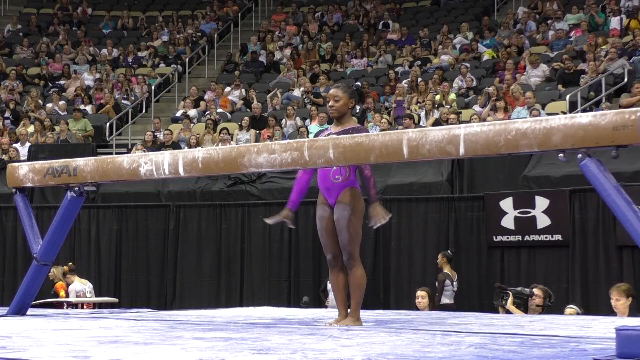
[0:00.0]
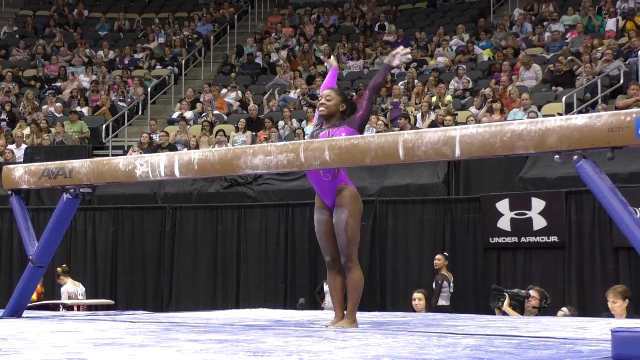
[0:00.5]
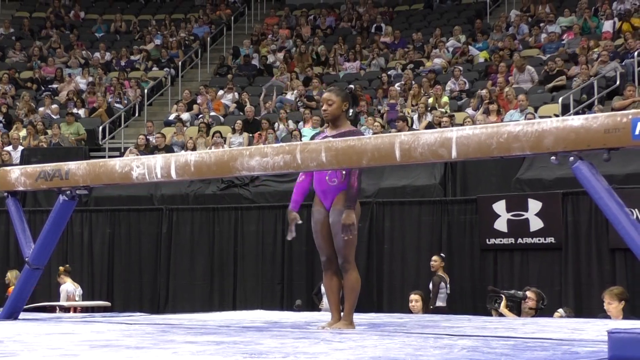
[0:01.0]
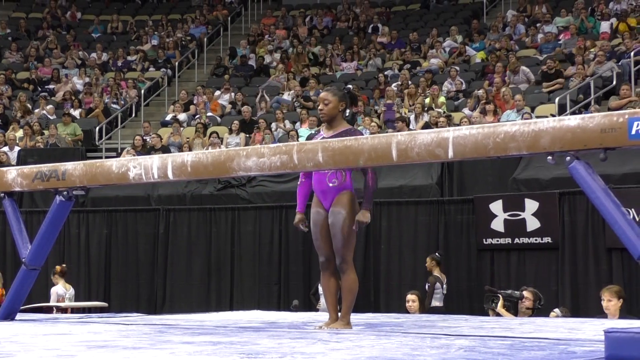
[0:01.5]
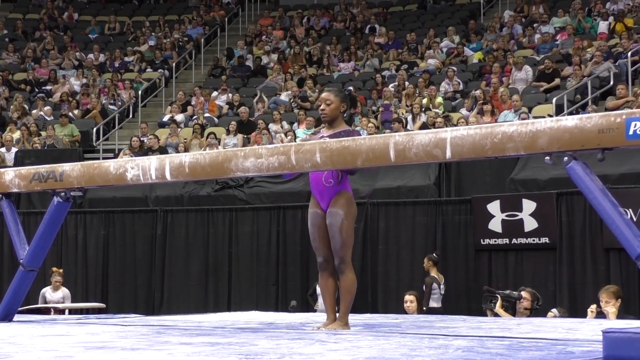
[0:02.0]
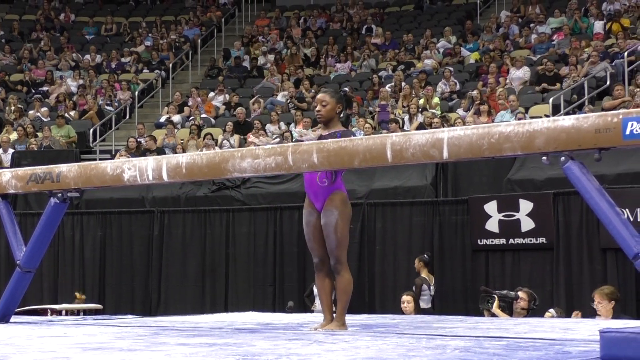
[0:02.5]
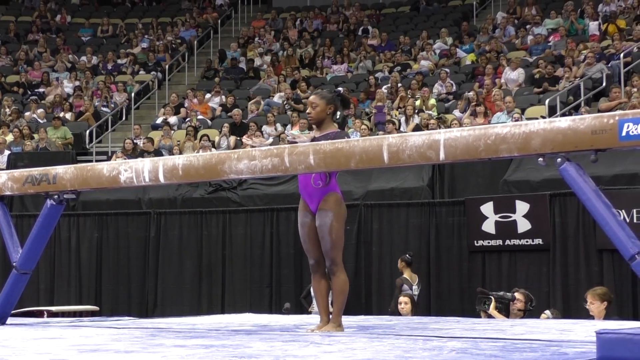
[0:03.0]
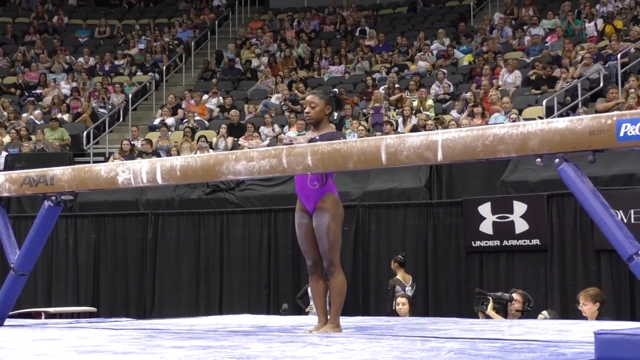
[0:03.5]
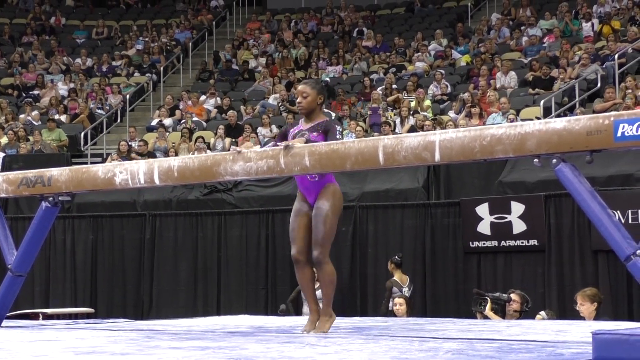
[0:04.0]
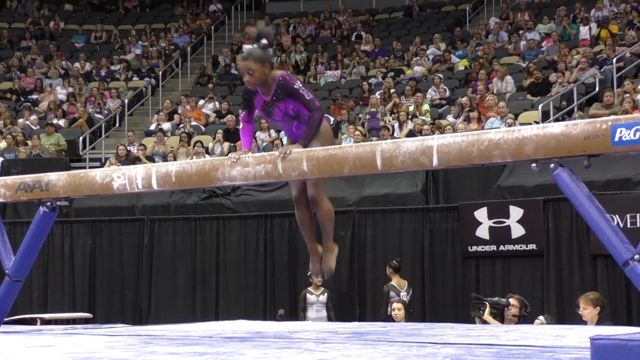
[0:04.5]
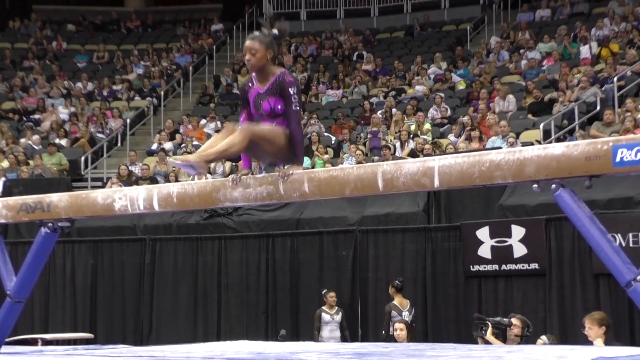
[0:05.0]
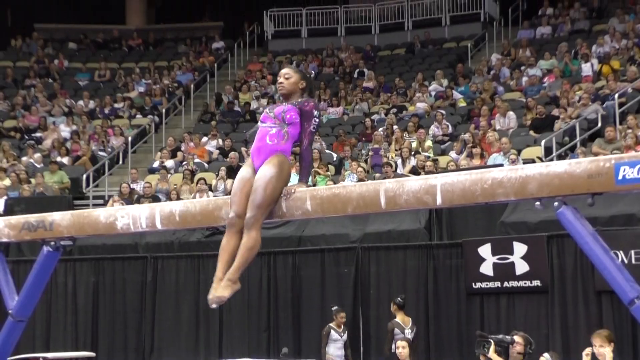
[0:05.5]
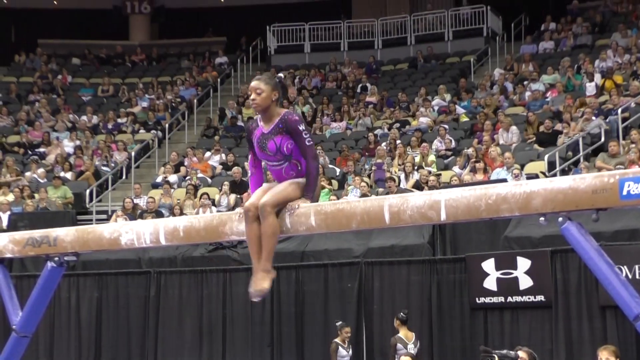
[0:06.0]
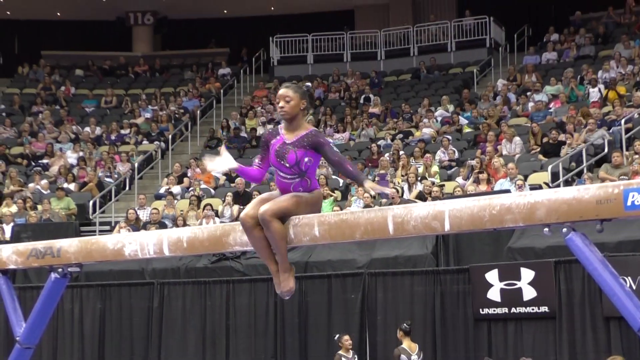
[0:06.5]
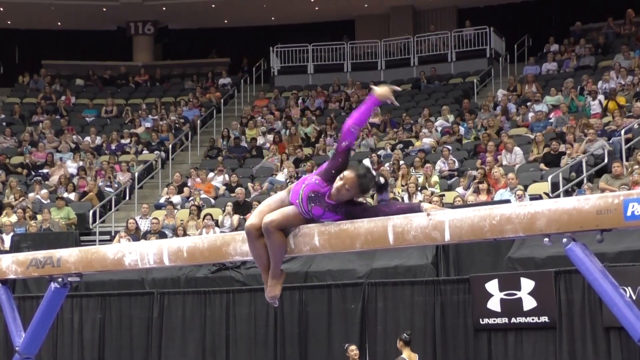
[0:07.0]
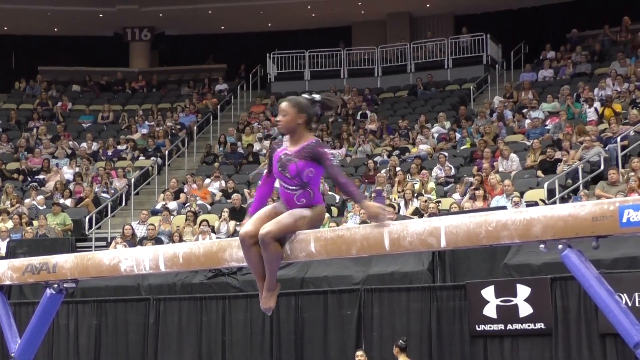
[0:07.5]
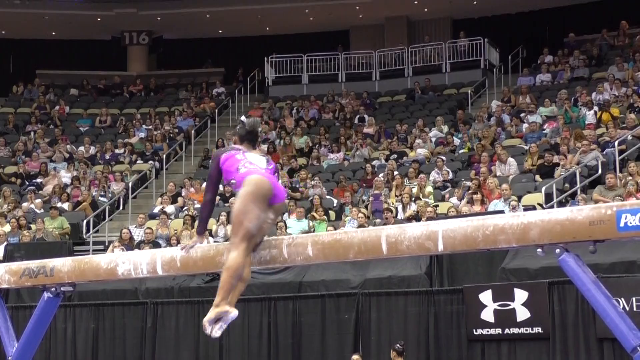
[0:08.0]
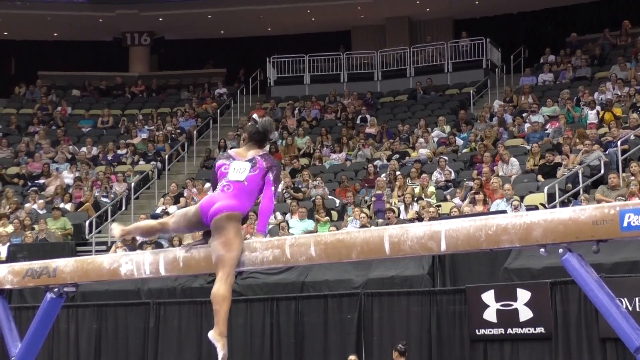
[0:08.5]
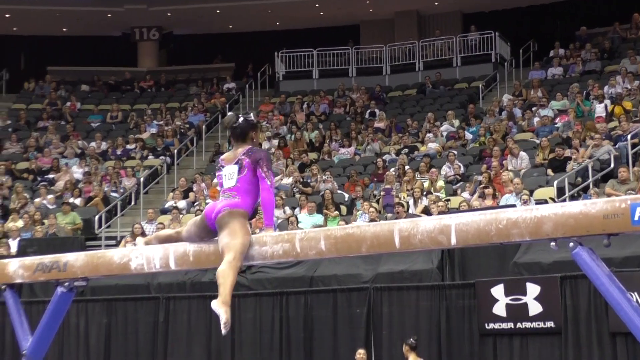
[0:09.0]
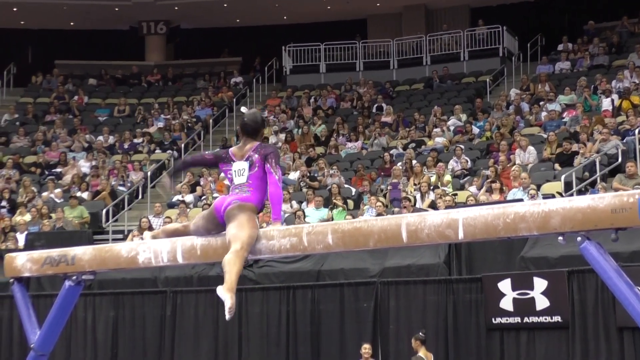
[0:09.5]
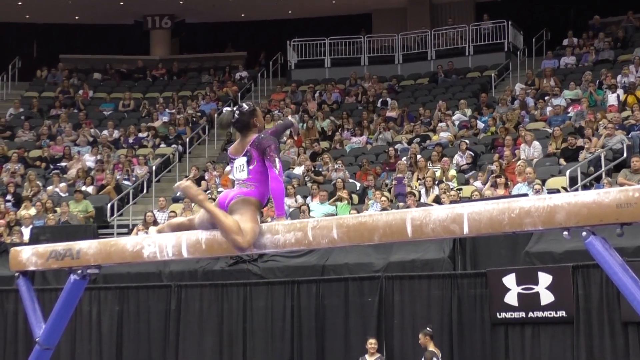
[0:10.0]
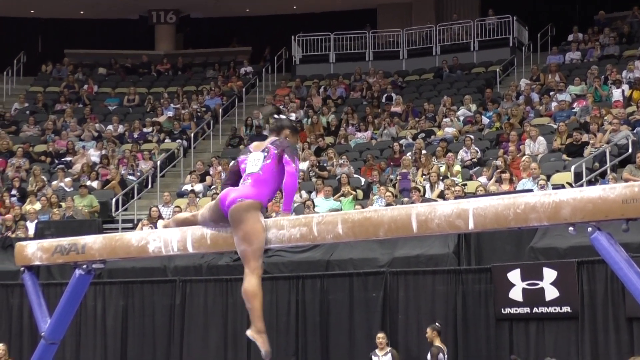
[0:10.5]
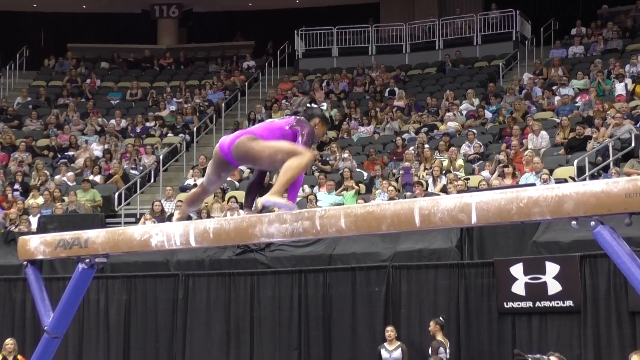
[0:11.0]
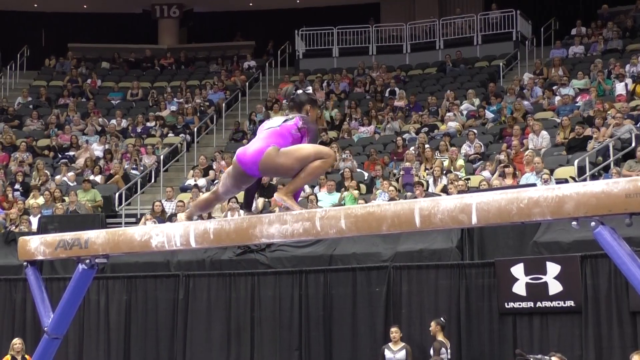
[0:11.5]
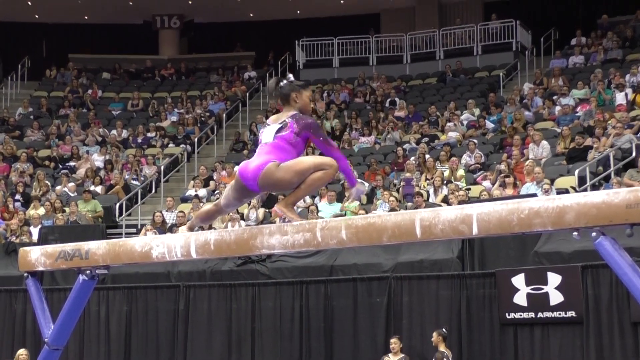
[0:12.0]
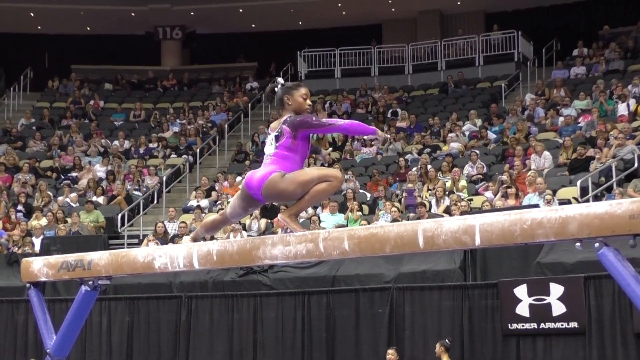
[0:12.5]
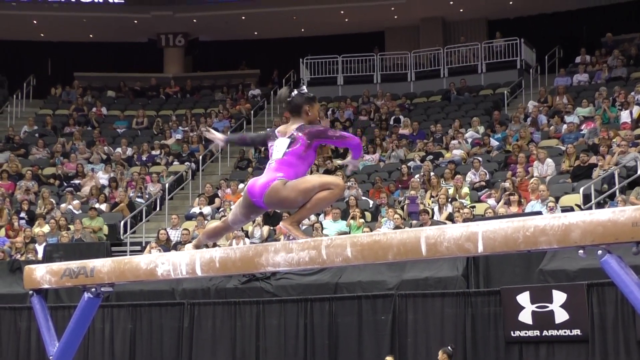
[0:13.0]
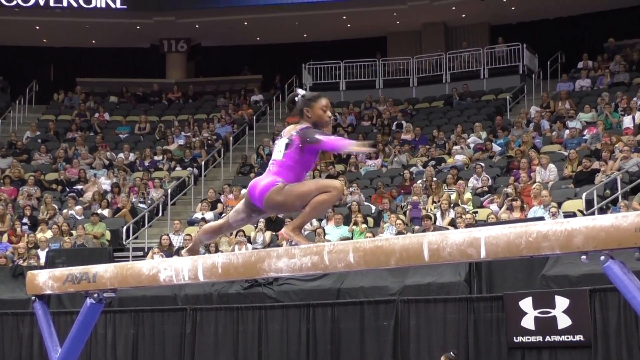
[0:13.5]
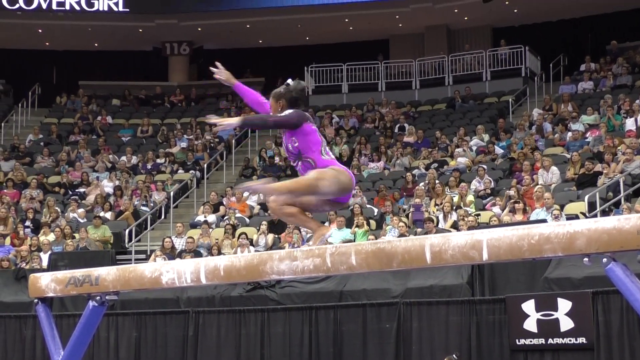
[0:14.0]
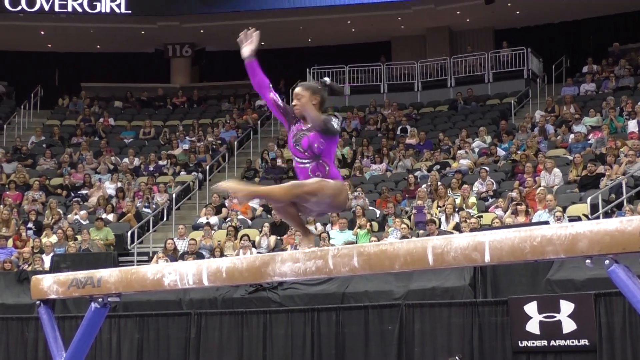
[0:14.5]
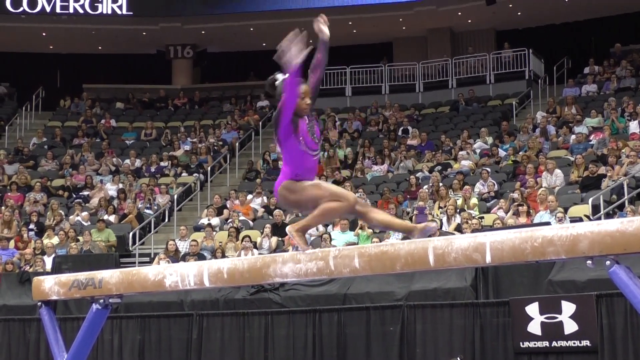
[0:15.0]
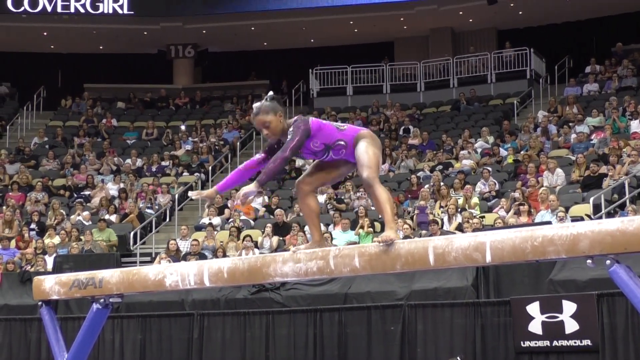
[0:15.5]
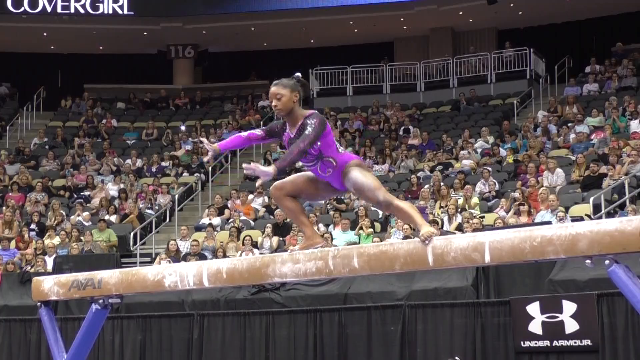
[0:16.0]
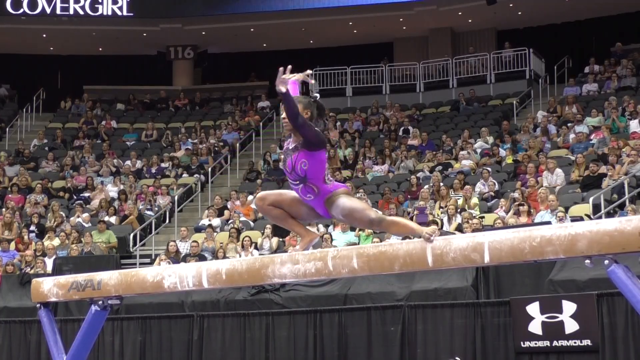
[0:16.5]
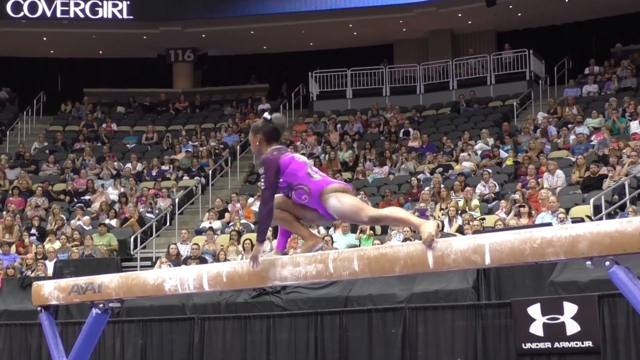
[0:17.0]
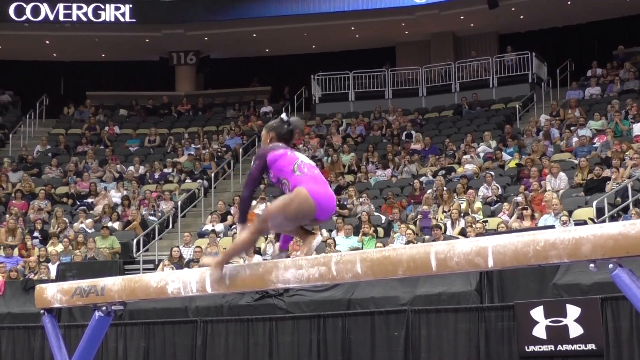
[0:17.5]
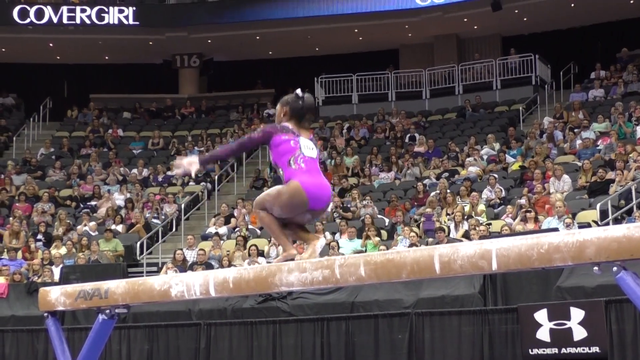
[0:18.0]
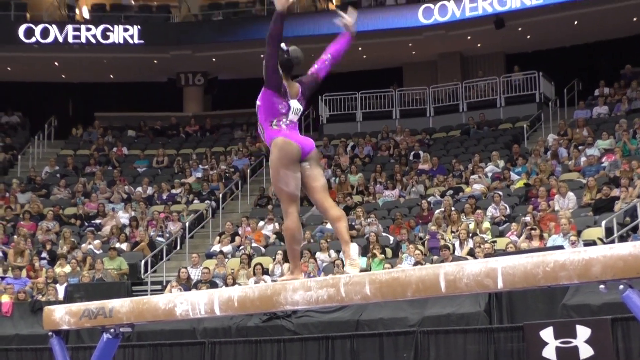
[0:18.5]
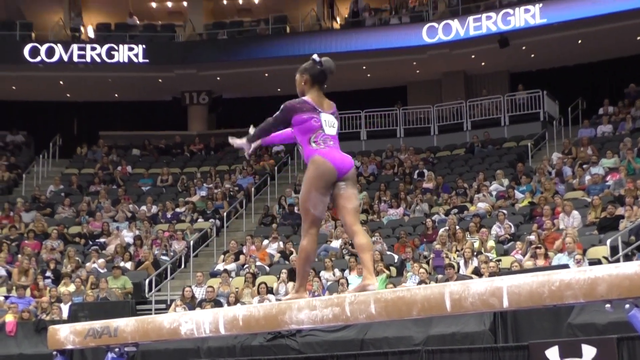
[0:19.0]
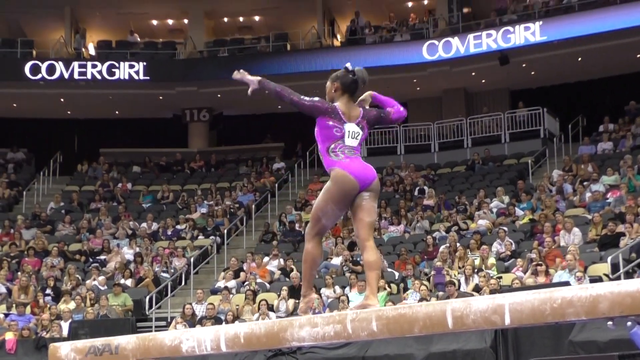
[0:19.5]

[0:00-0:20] A very young Simone Biles performs a balance beam routine. The view is a close-up on the floor. She stands behind the beam and does the beginning pose with both hands overhead, then climbs on in a sitting position and does a kind of stretch. She lifts one leg up, gets into a crouch on one leg and does a turn that doesn't quite land; she has to kind of stop herself before losing balance. She then stands up with one leg behind the other, puts both arms overhead again and switches legs into another pose. There is a bit of a wind-up before a standing trick. The stands are visible behind her as she performs; the stadium seems fairly full, though not completely. Directly behind her, about where her feet are, some of the other gymnasts are visible, as well as a person taking video of the performance.